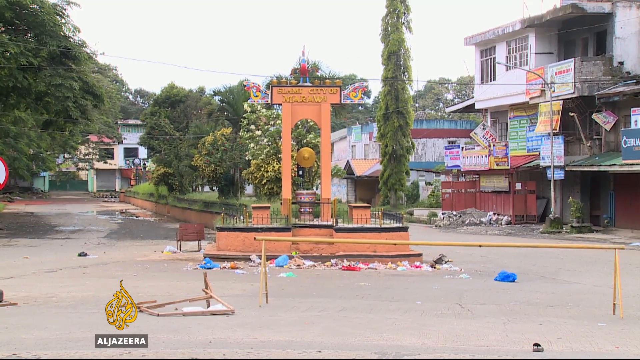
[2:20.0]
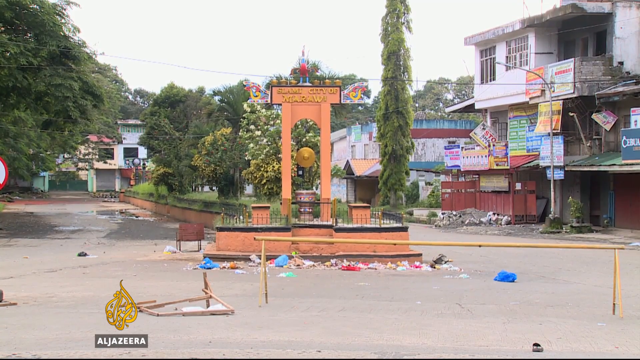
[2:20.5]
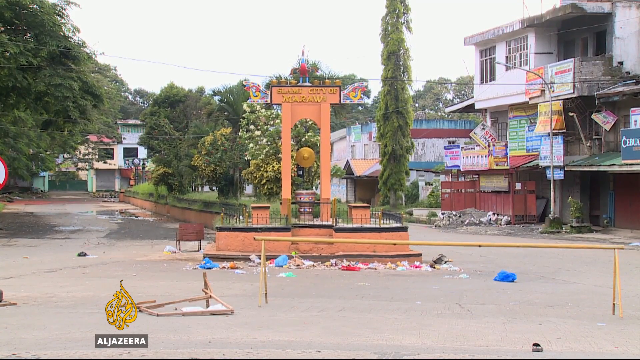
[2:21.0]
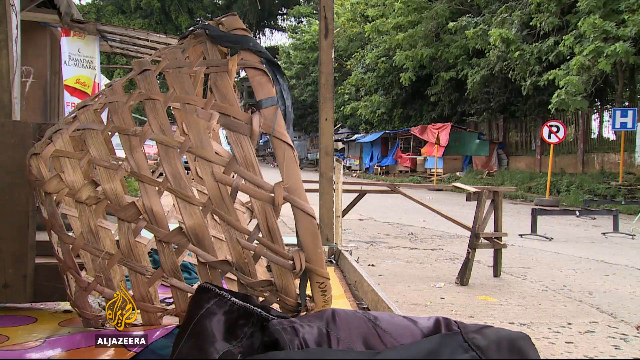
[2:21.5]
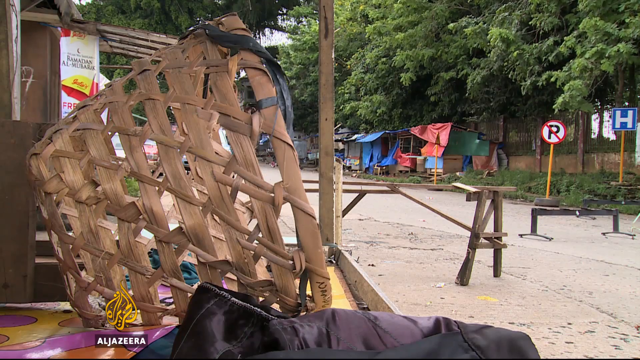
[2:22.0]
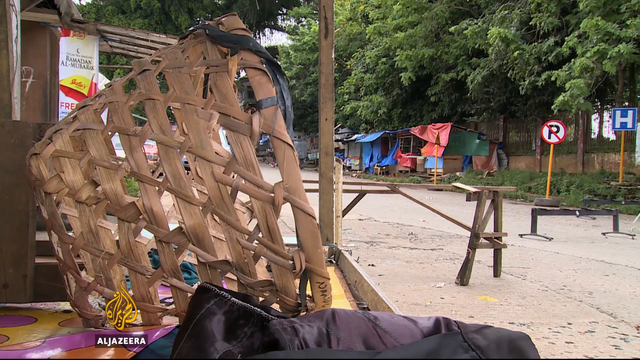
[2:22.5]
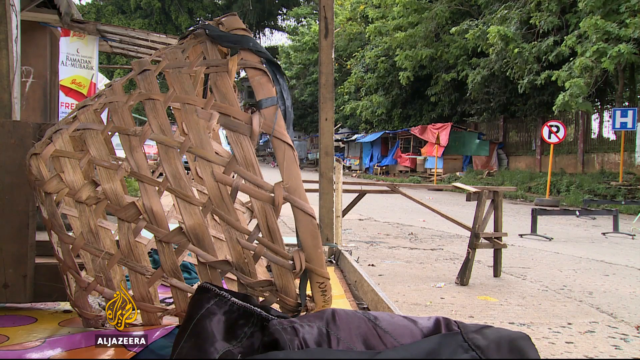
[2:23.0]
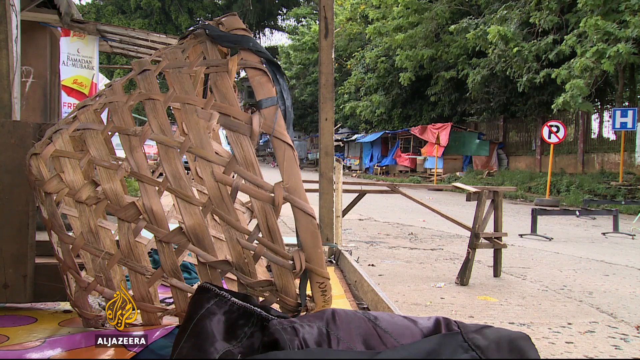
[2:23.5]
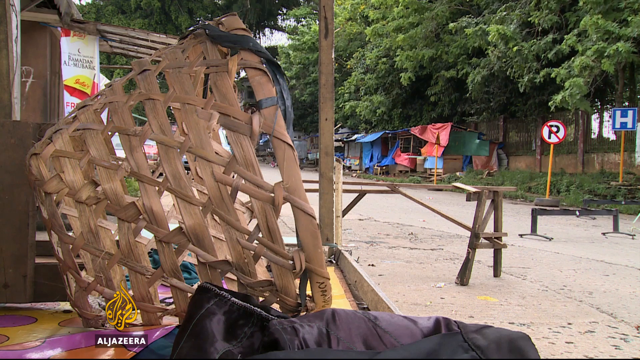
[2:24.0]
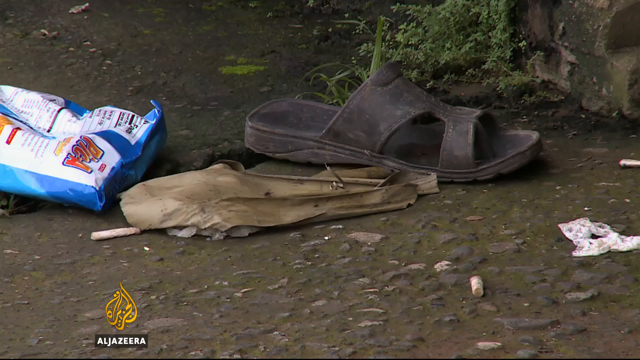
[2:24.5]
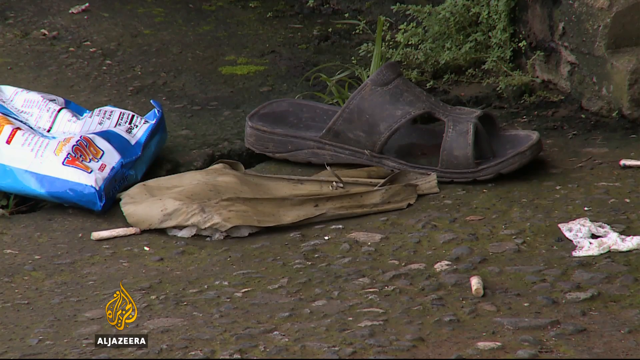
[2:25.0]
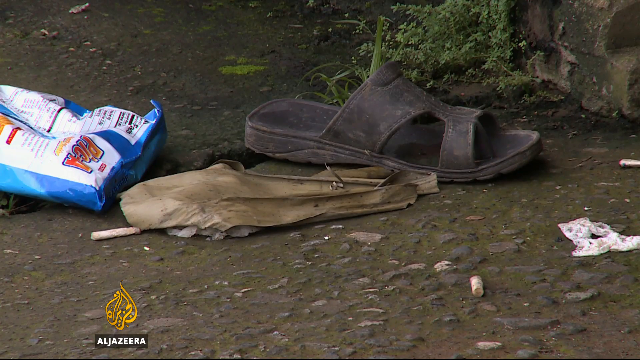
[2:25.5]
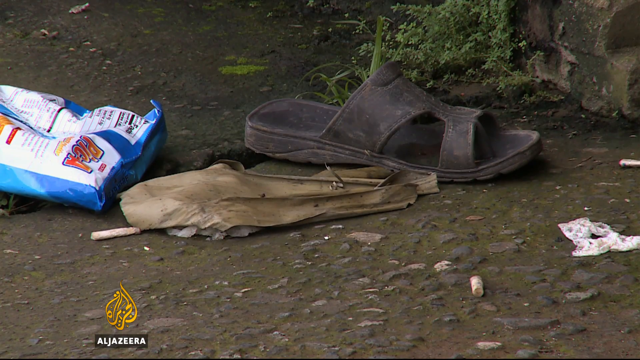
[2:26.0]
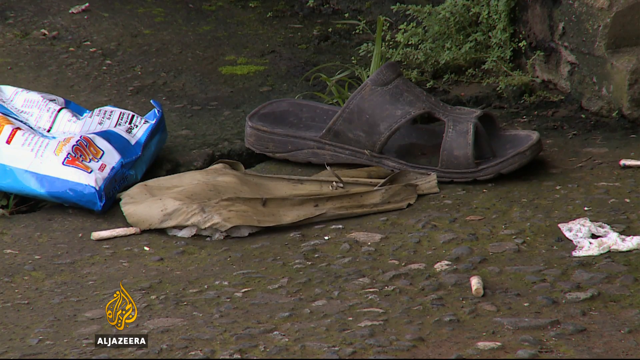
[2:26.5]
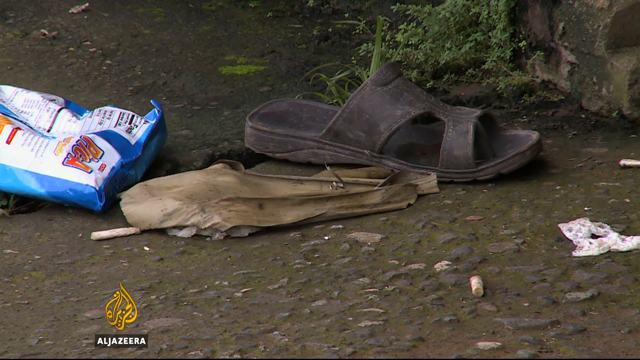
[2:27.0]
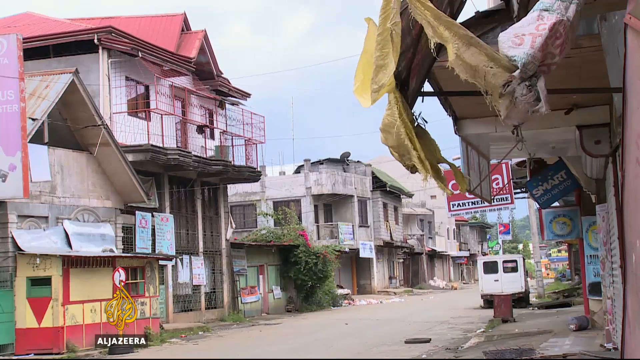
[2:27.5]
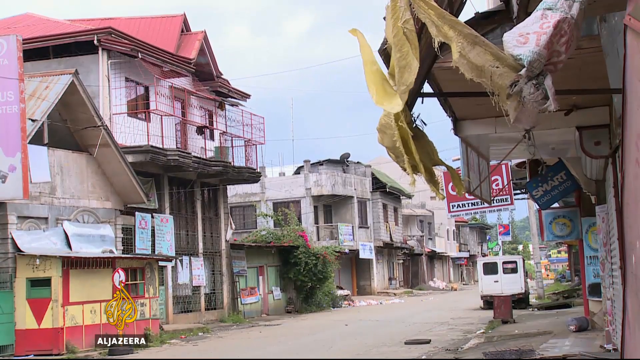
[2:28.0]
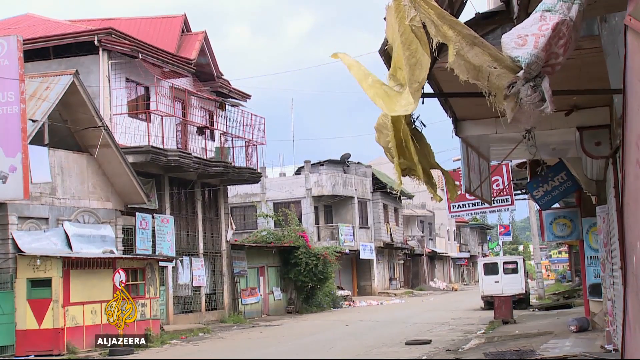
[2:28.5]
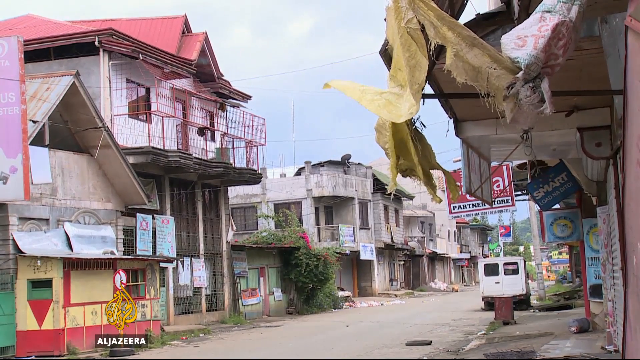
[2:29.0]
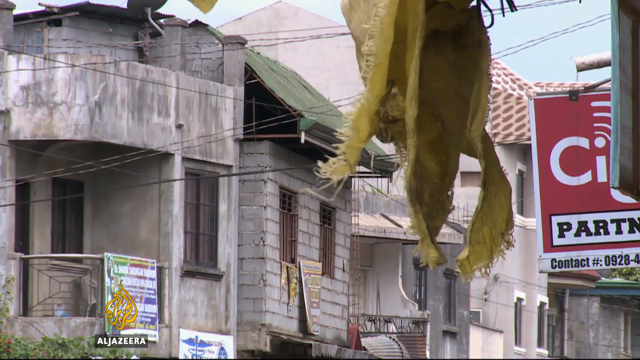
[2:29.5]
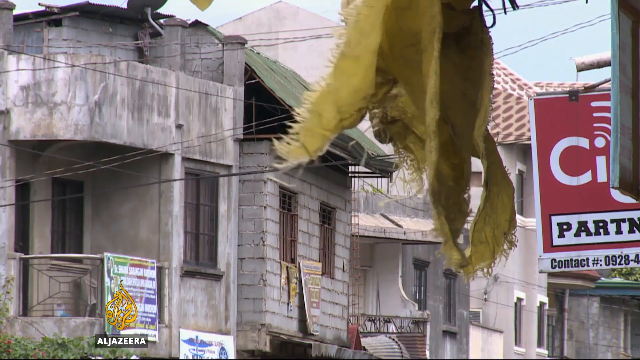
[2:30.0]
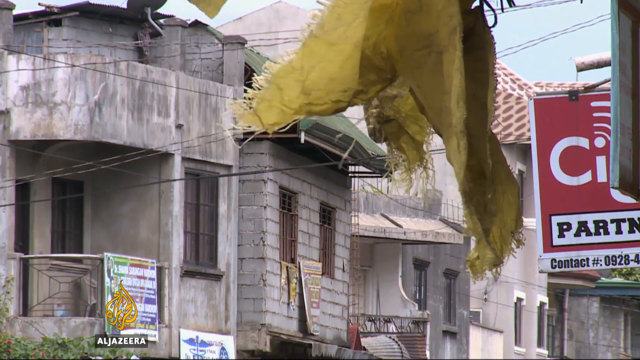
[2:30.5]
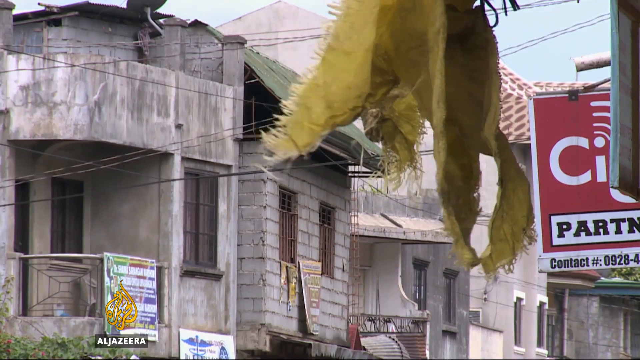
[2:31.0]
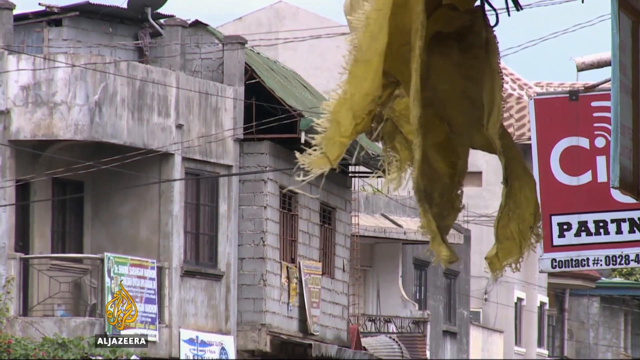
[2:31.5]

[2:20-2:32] The outdoor scene appears again, with more shots of an abandoned city: streets, houses and an abandoned town square, and a close-up of a sandal in trash. No one is outside and nothing seems to be happening; the city is desolate, with many dwellings, businesses and trash but only empty streets and square.